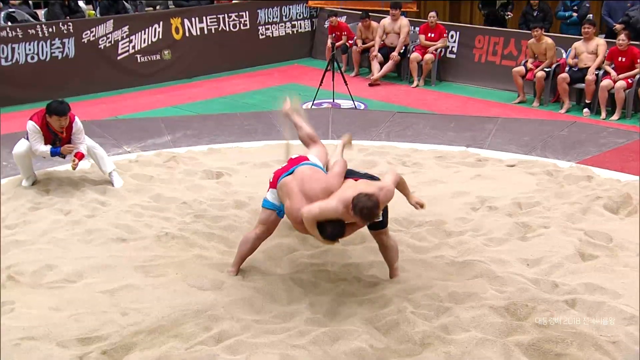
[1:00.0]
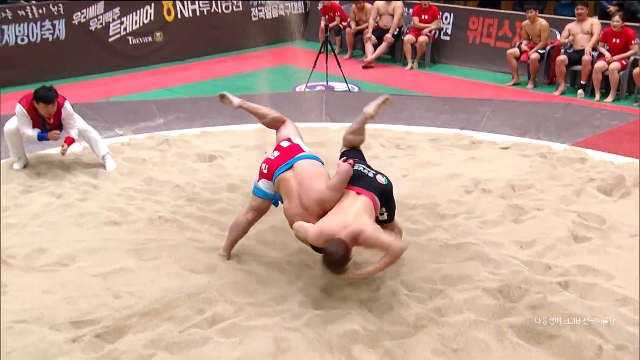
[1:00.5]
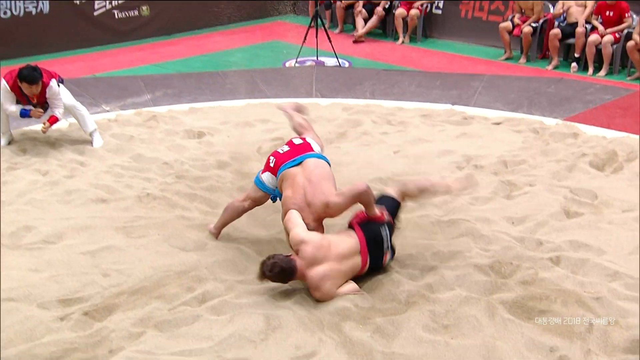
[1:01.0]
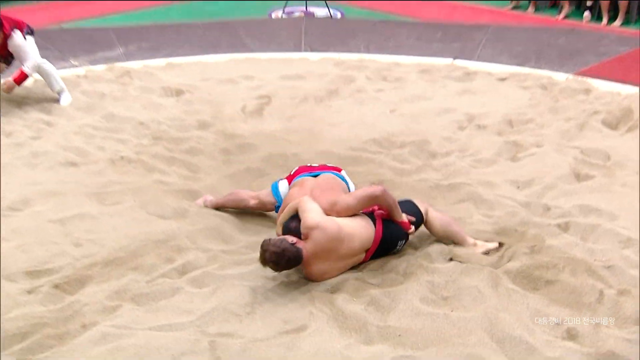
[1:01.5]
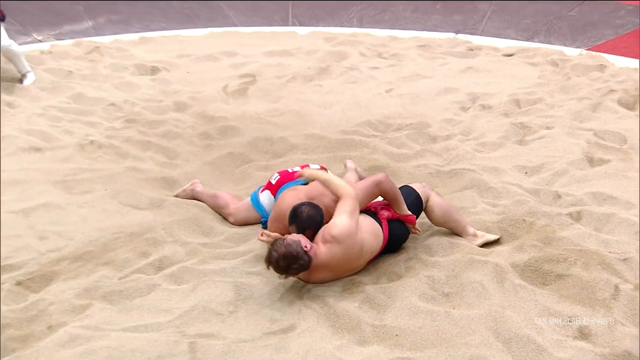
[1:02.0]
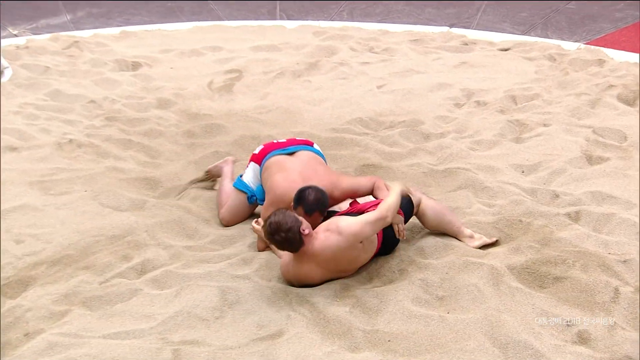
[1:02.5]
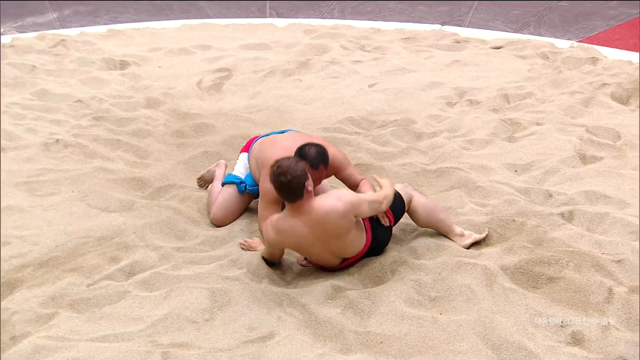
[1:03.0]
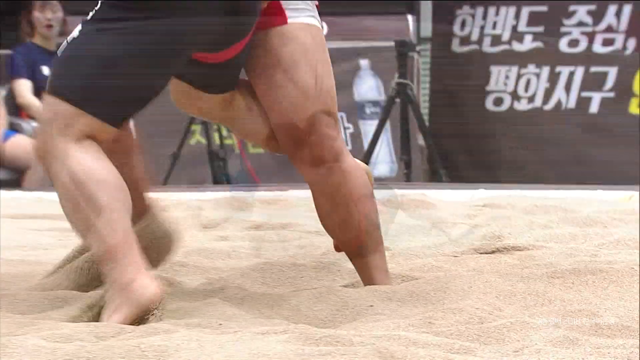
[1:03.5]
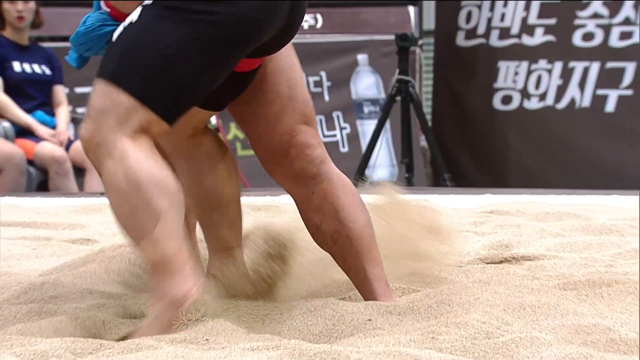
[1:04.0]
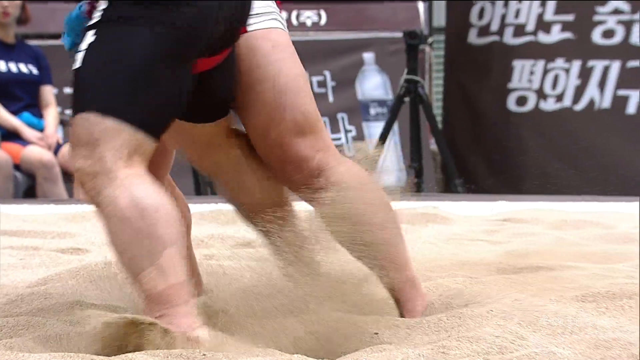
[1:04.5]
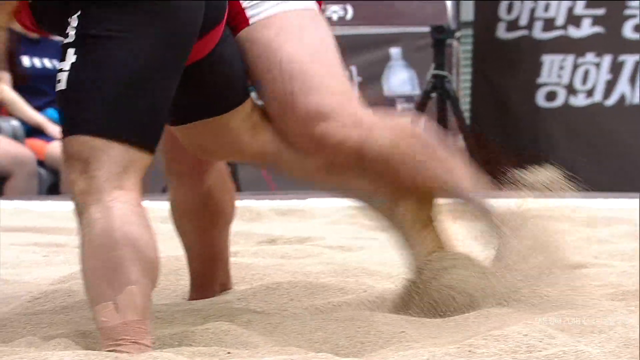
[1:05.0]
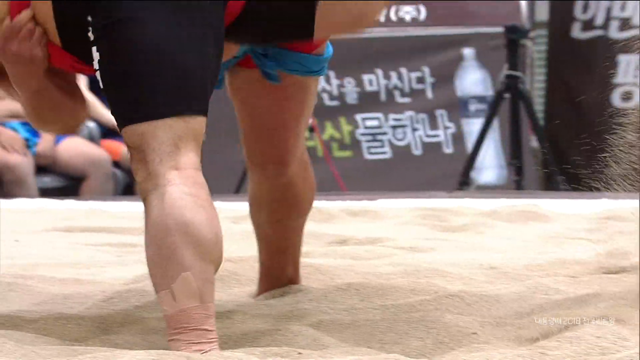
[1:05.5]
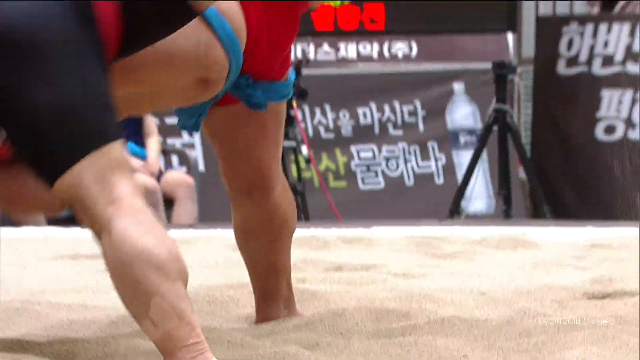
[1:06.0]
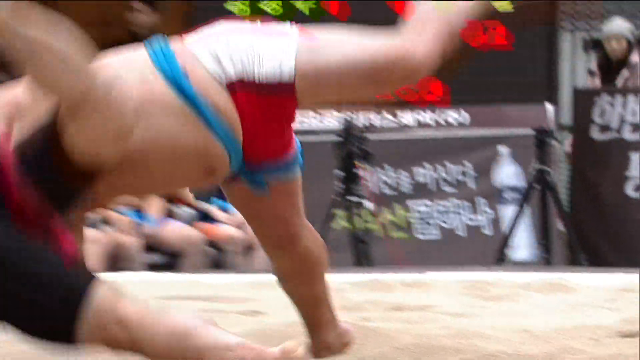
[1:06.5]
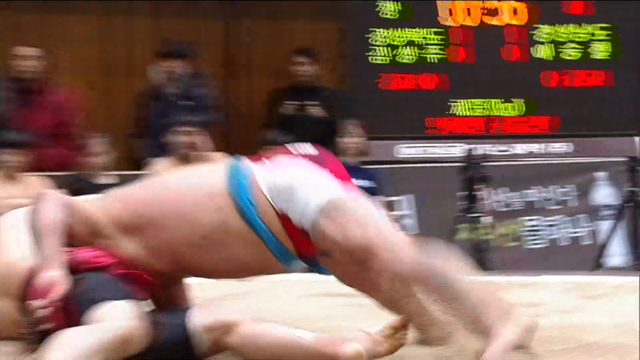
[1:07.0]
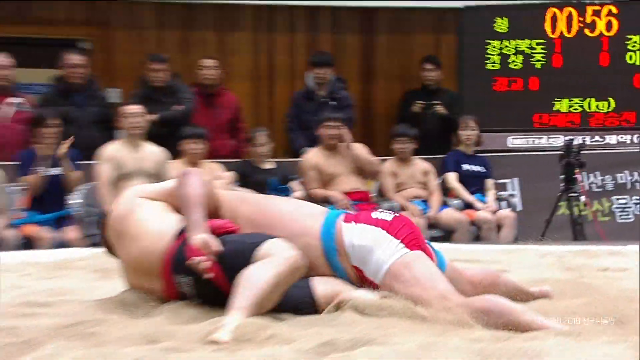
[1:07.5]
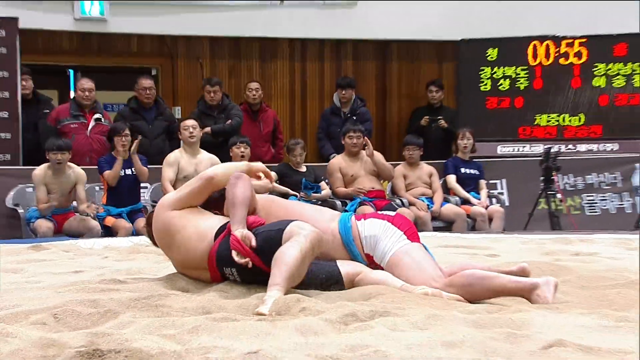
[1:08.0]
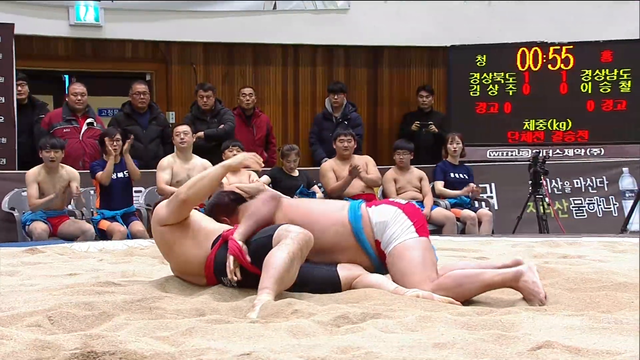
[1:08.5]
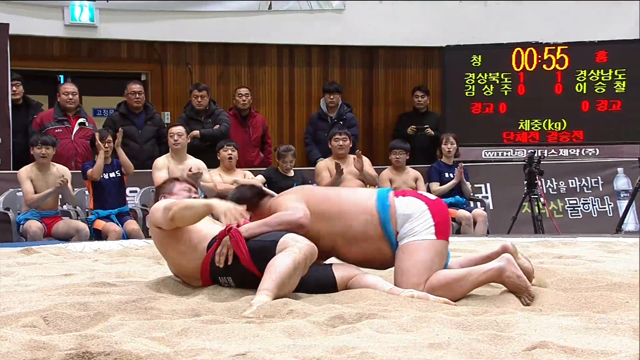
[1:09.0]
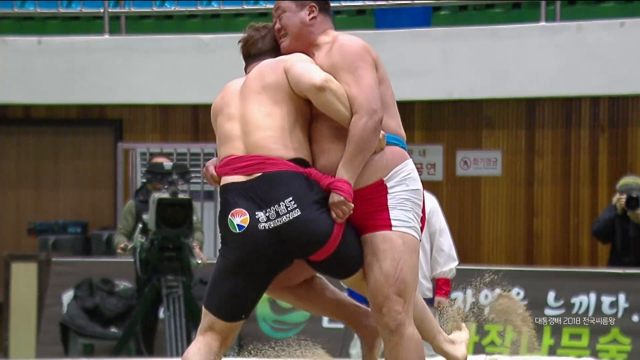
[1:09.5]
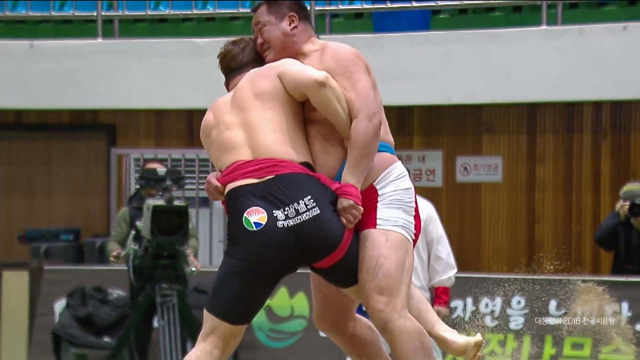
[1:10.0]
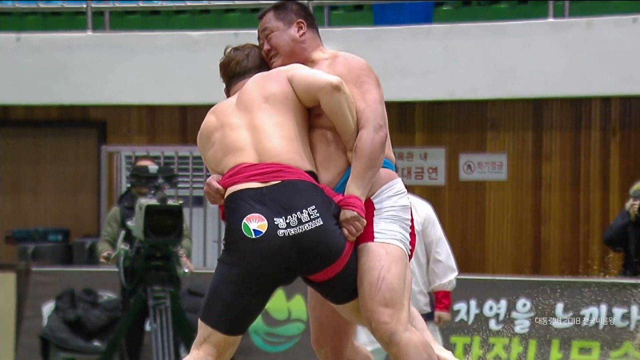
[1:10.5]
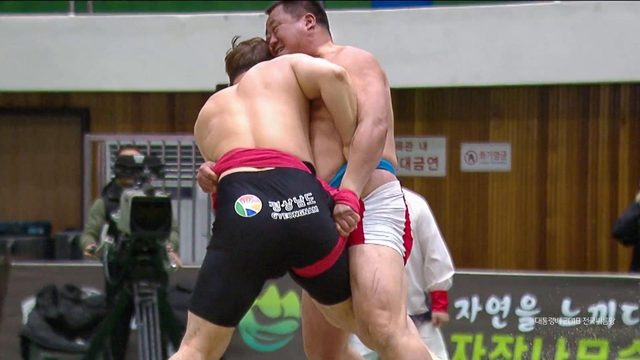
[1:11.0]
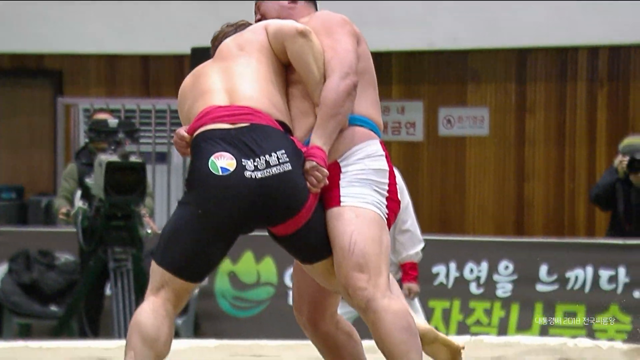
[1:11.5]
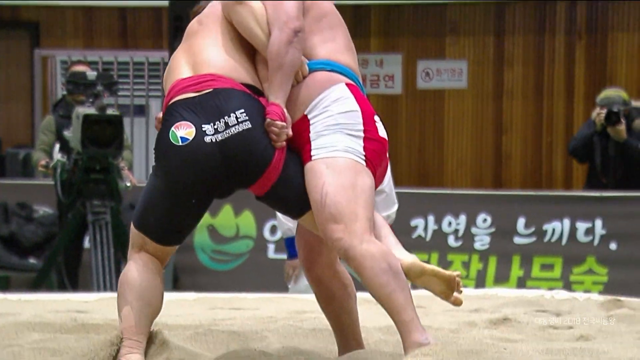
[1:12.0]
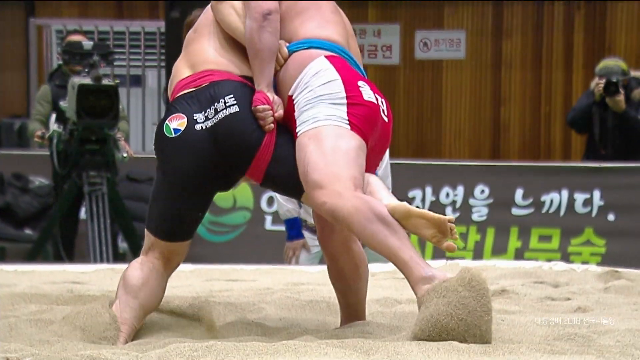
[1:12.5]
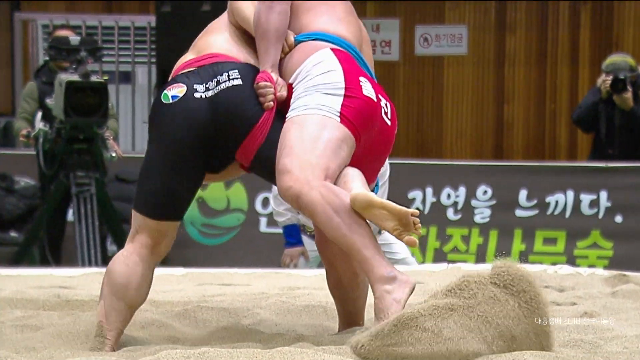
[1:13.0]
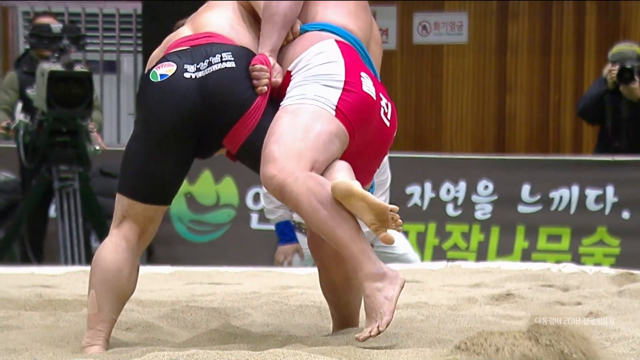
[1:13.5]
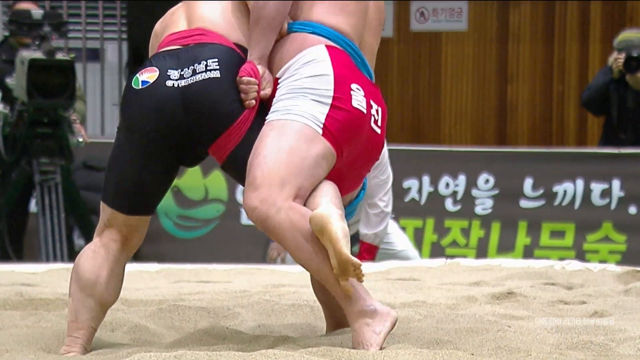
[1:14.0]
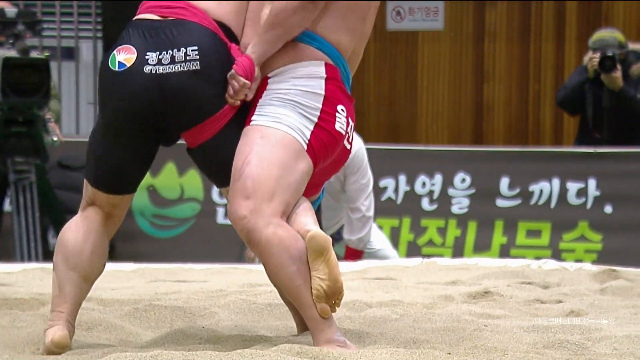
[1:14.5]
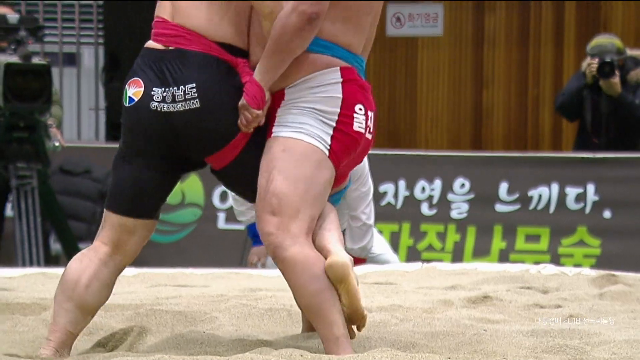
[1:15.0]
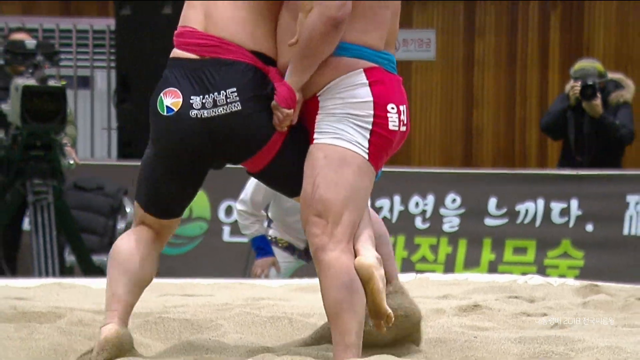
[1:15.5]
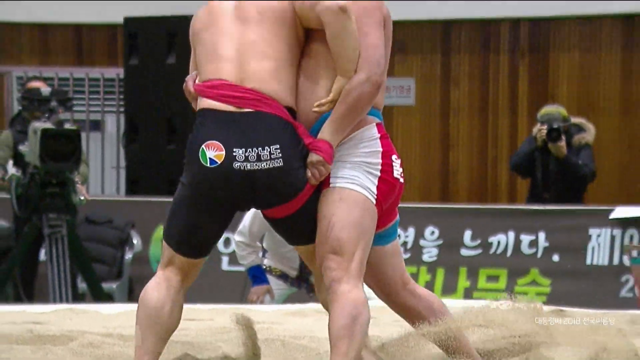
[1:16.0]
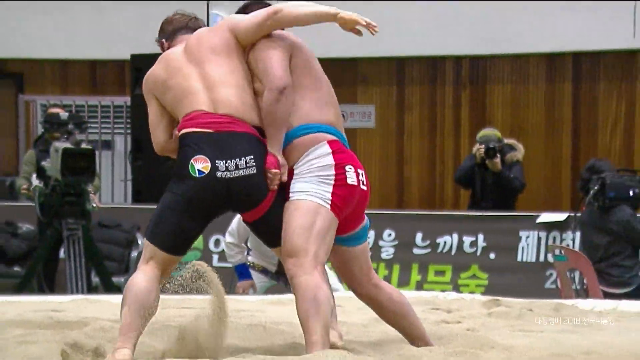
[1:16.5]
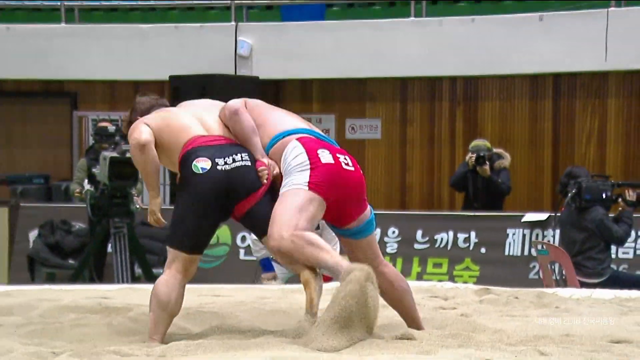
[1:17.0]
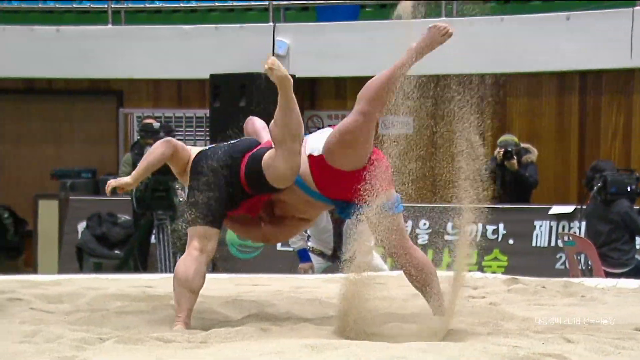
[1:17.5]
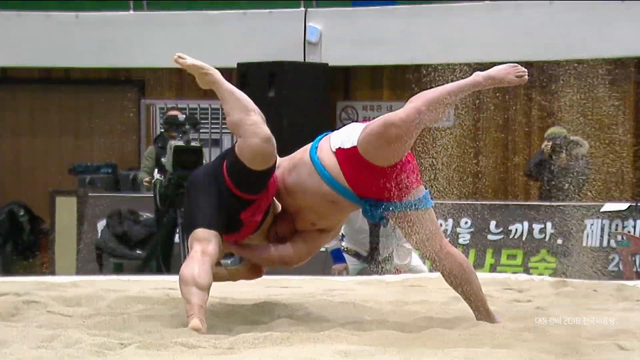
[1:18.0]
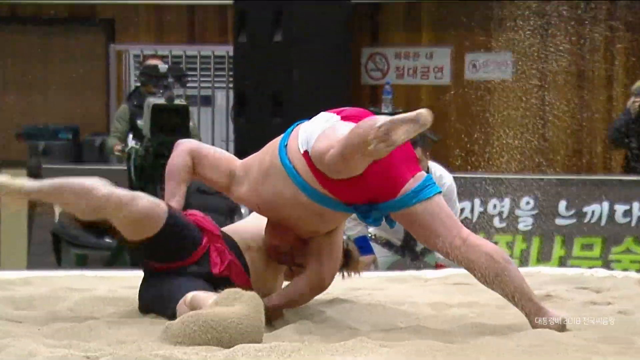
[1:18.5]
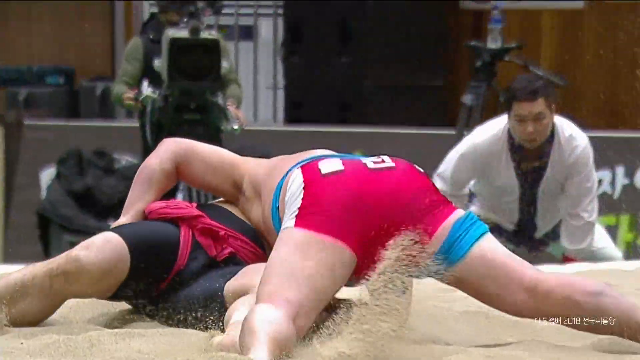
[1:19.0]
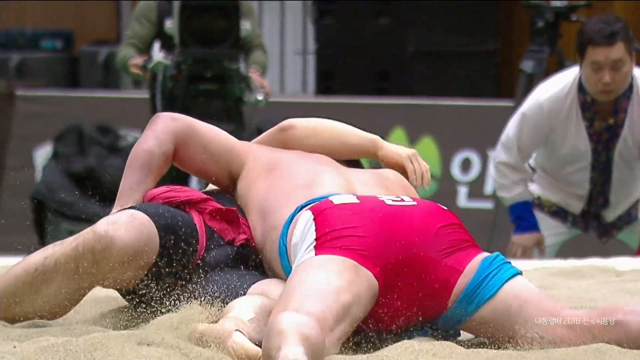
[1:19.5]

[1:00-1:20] A slow-motion replay shows the wrestler being thrown to the ground. It looks like, as he threw the other wrestler to the ground, his head was in a grip, a headlock under the other man's arms, so perhaps he got hurt. A close-up shows their feet shuffling through the sand. One of them is lifted off the sand and thrown through the air, sand goes flying, and the two of them land on the sand. In the background, several people sitting in chairs are clapping. As the slow-motion replay repeats, a video camera on a tripod is filming the event, and a photographer holds a camera up to their face taking photos. The replay shows the two men grappling with their hands on each other's sashes before one of them finally loses his footing and is picked up by the other, spun through the air and thrown down on the ground.